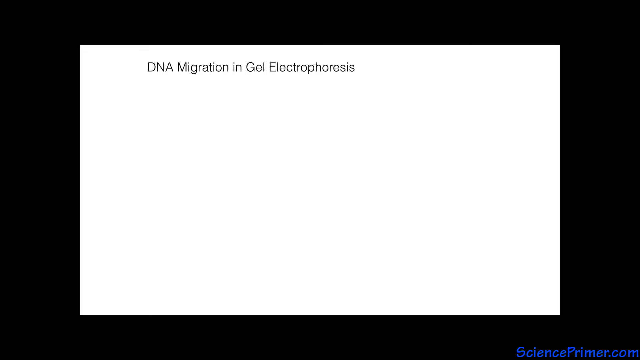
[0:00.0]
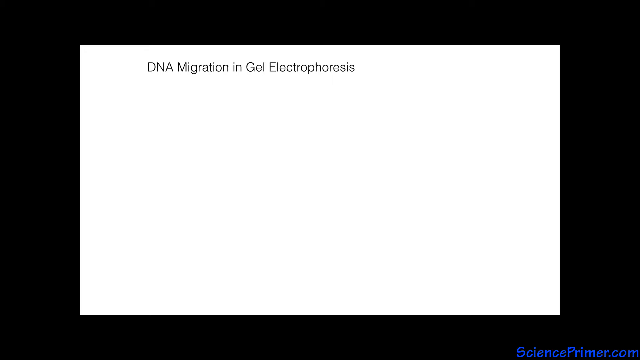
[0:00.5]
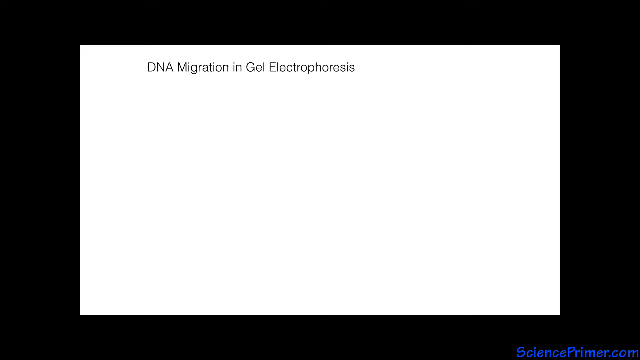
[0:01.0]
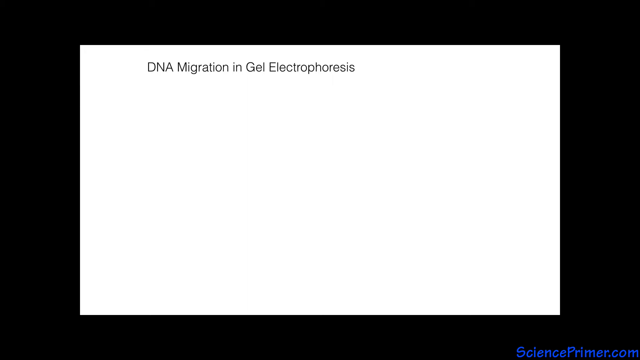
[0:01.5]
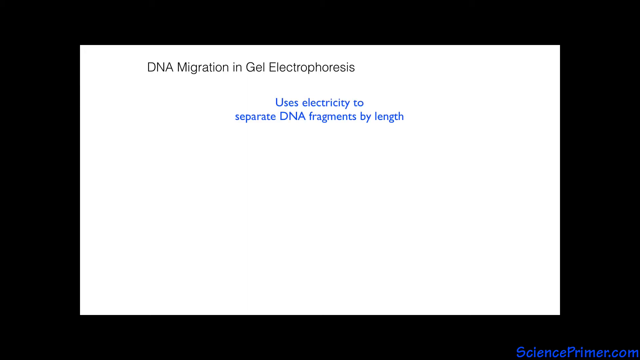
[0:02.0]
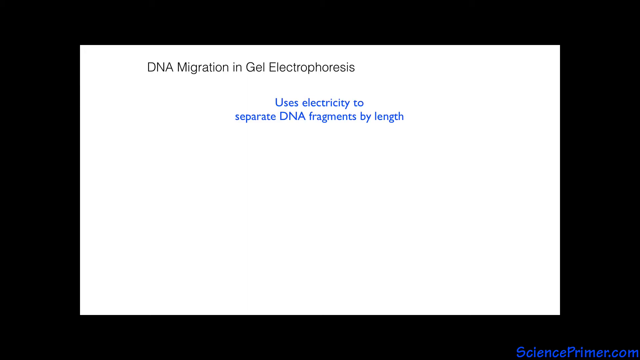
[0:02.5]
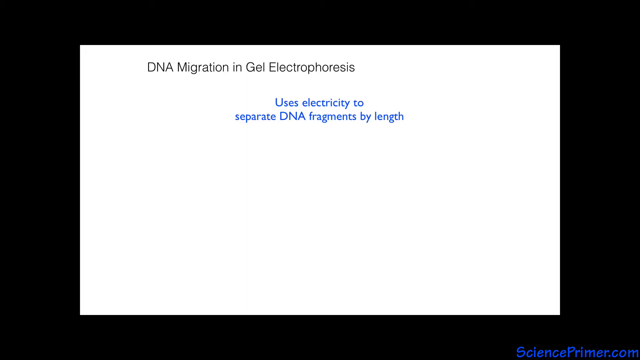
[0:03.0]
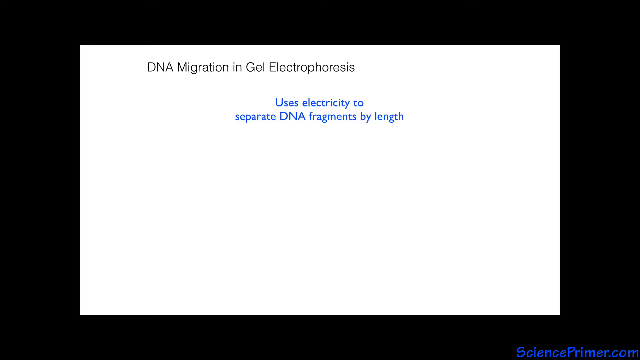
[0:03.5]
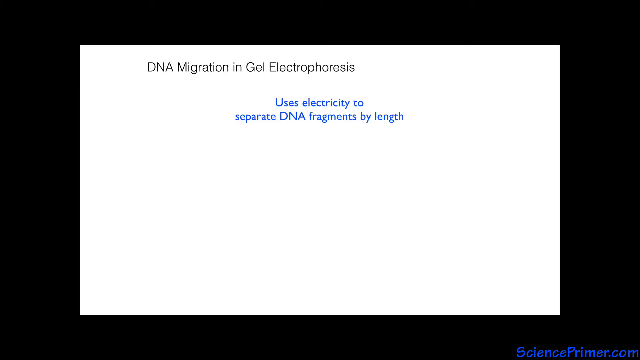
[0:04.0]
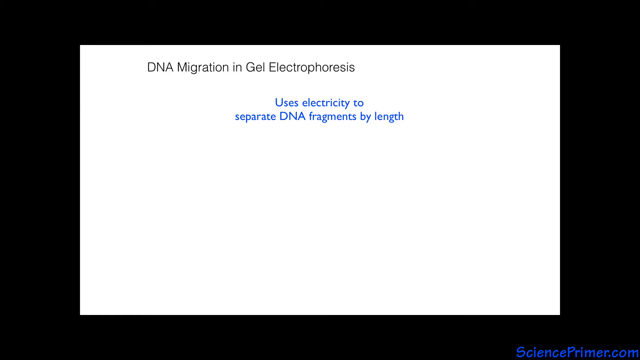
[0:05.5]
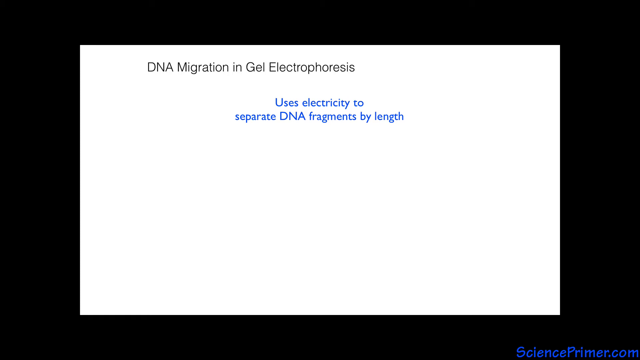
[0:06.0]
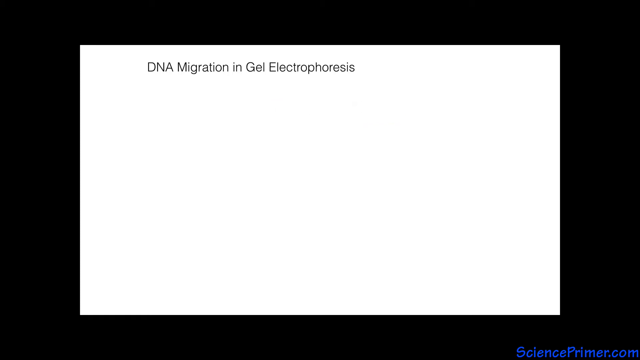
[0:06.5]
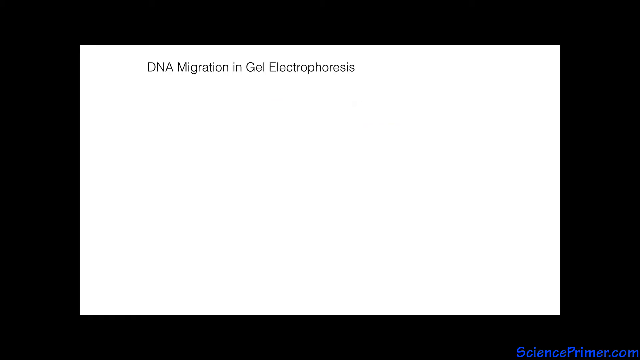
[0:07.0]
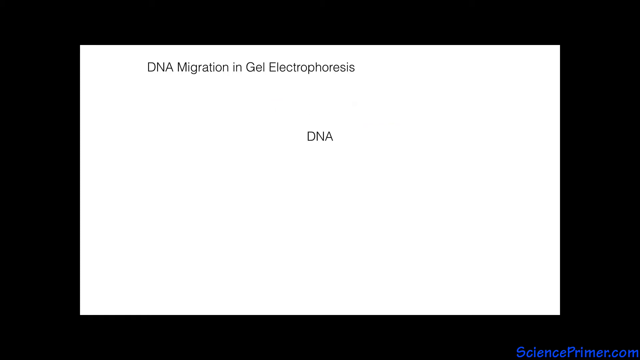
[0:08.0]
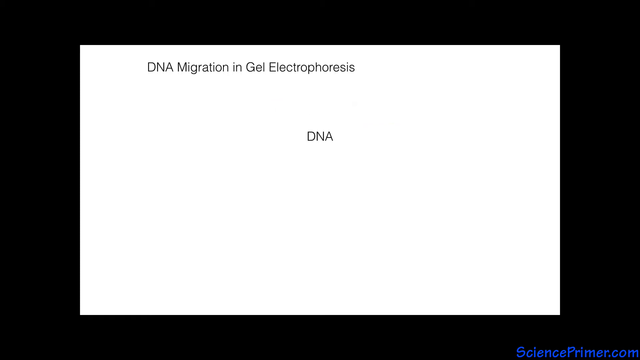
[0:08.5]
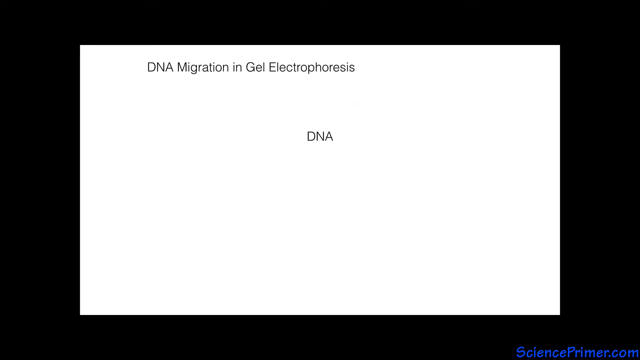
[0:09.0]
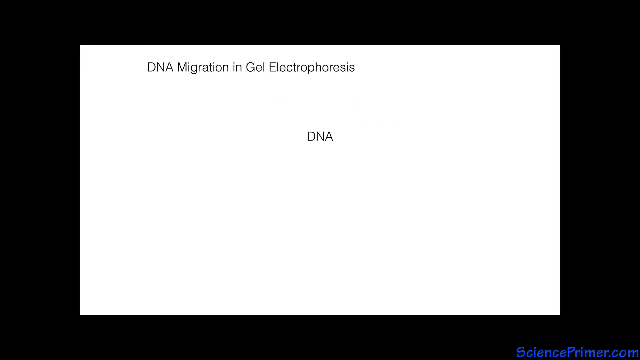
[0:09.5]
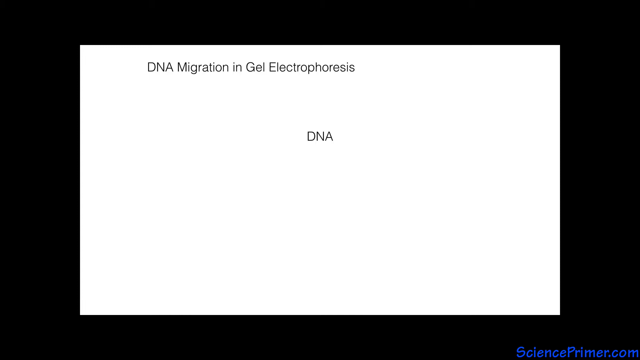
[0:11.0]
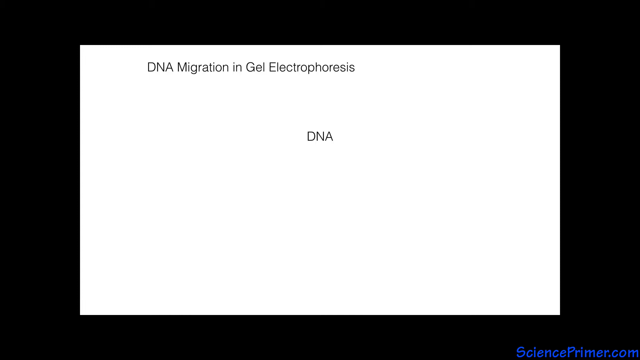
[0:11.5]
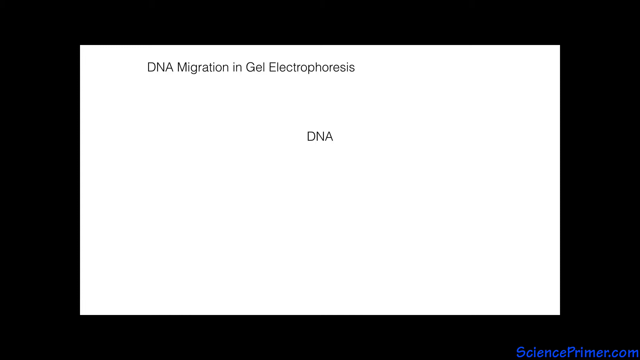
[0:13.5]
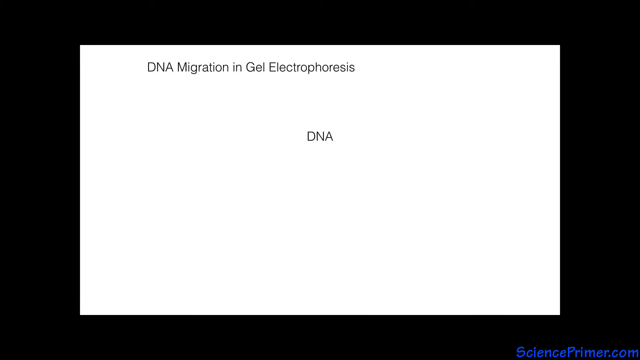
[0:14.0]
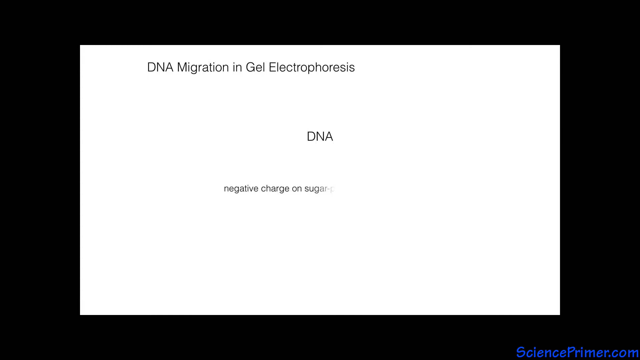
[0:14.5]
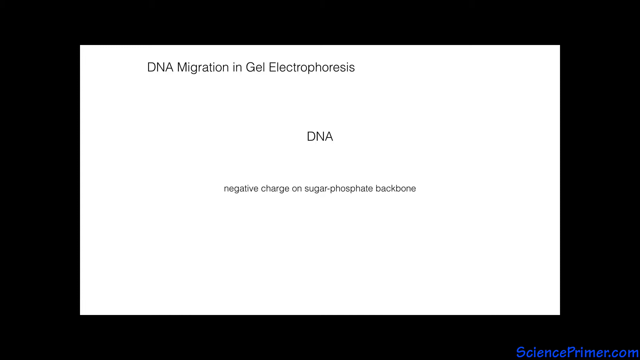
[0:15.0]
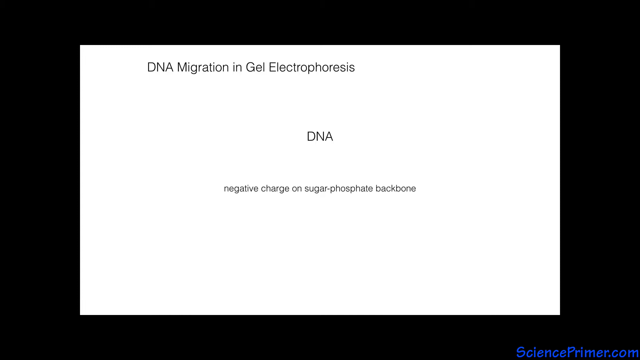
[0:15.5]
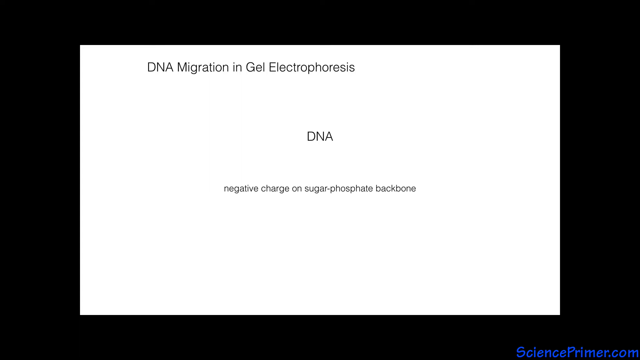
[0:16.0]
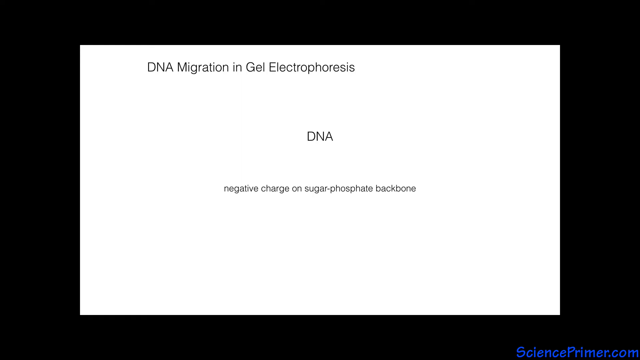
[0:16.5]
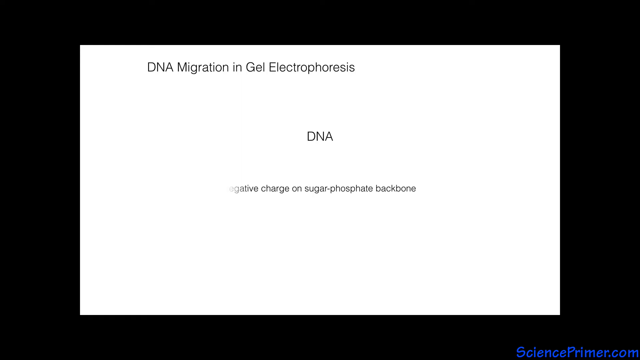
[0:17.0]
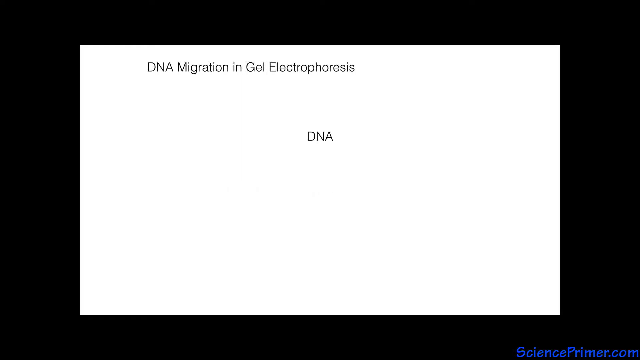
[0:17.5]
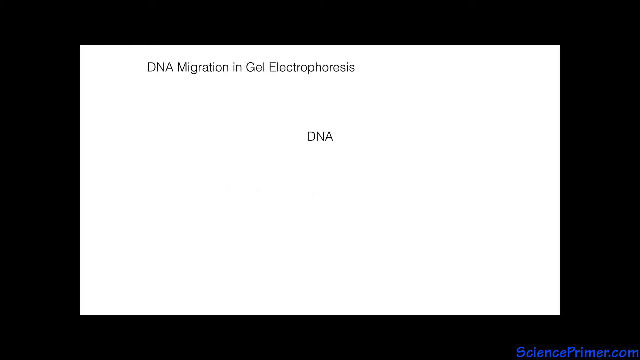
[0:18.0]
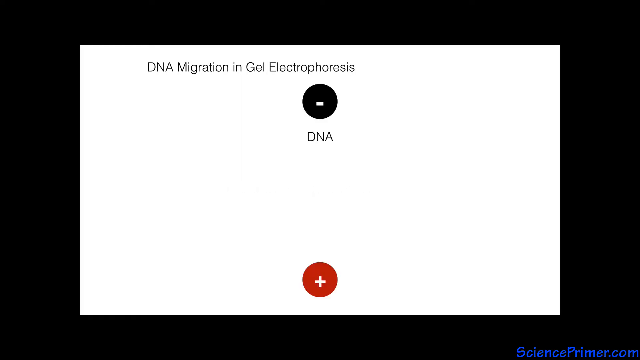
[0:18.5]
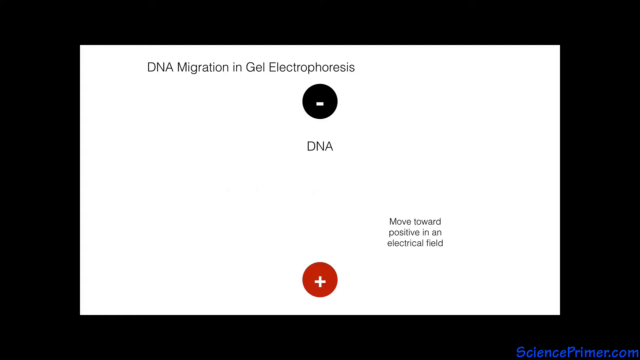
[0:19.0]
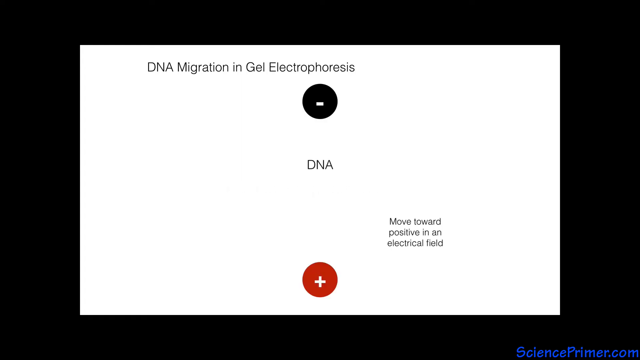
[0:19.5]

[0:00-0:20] A white rectangle appears on top of a black screen. Black text at the top of the rectangle reads "DNA migration in gel electrophoresis." Below it, in the center of the white rectangle, blue text reads "uses electricity to separate DNA fragments by length." The blue text disappears, and the text "DNA" appears where it was shown. Underneath the DNA text it says "negative charge on sugar phosphate back bone." Two symbols are shown in black and red circles: a negative symbol in a black circle above the DNA text, and a red plus sign at the bottom. The DNA text moves toward the positive red circle. At the bottom of the screen, black text reads "move towards positive in the electrical field," positioned to the right of and slightly above the plus sign in the red circle.